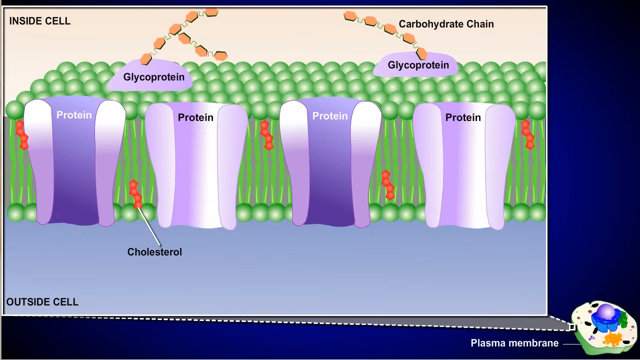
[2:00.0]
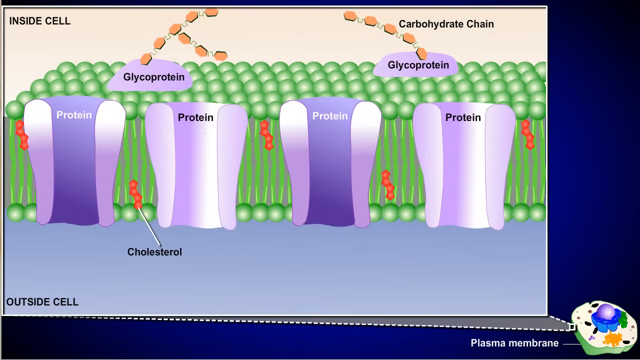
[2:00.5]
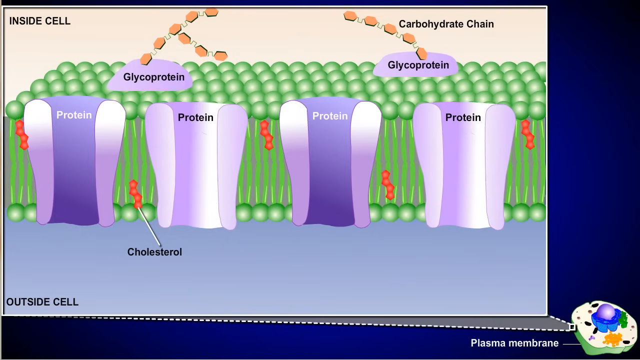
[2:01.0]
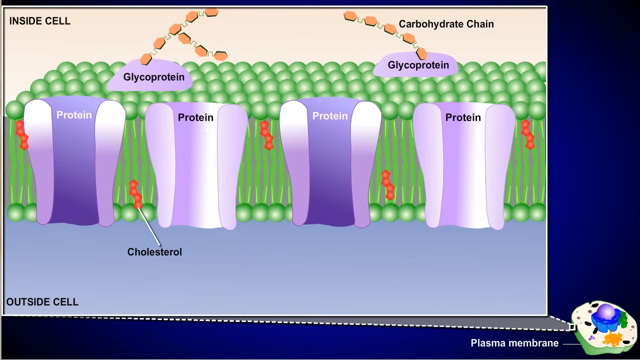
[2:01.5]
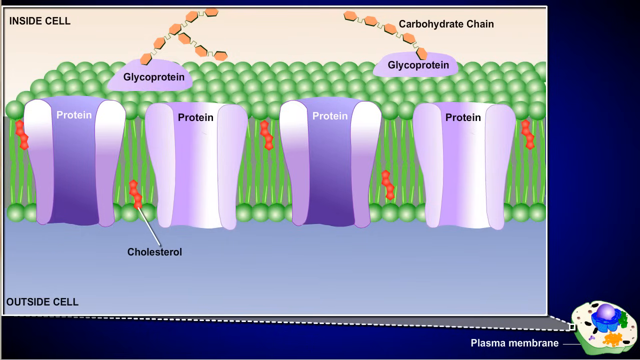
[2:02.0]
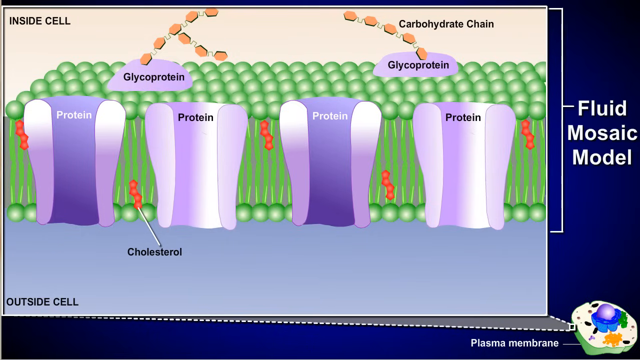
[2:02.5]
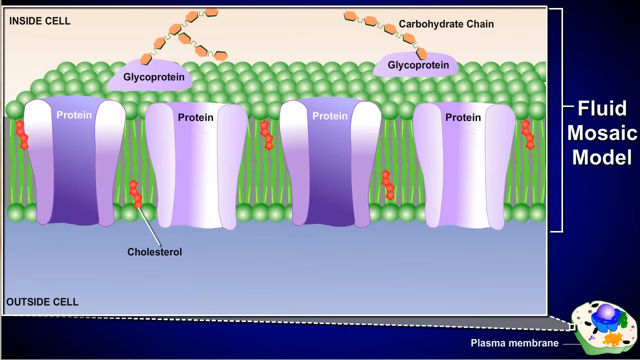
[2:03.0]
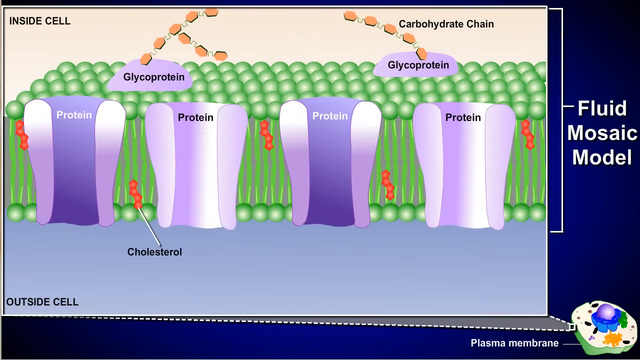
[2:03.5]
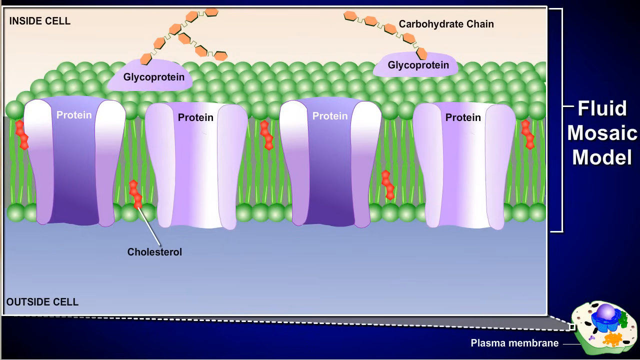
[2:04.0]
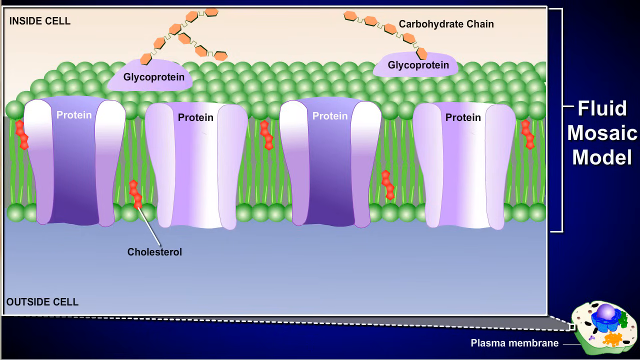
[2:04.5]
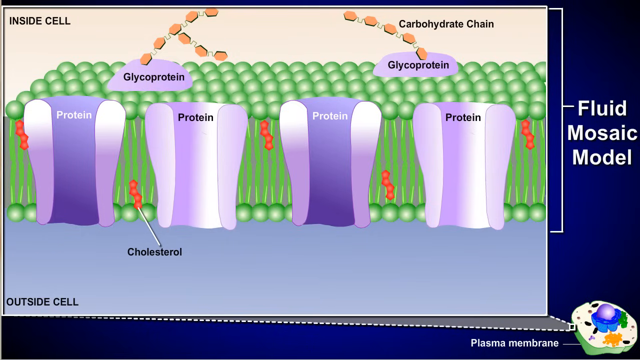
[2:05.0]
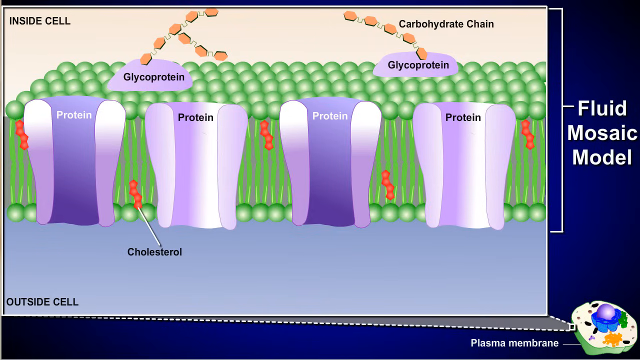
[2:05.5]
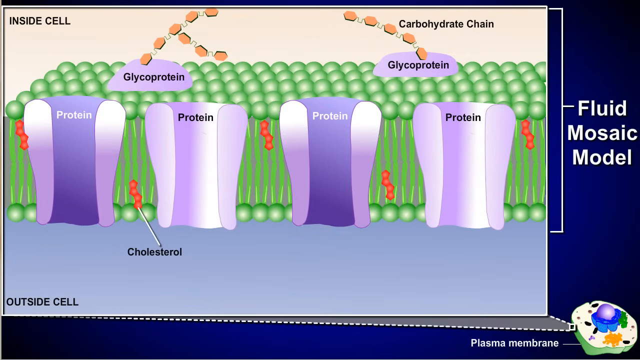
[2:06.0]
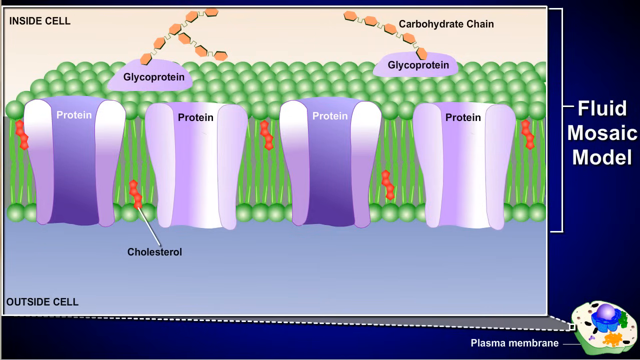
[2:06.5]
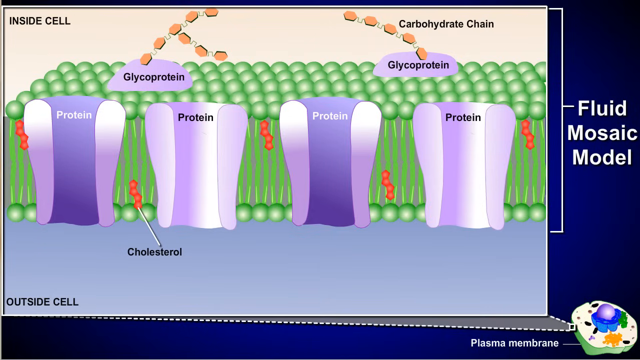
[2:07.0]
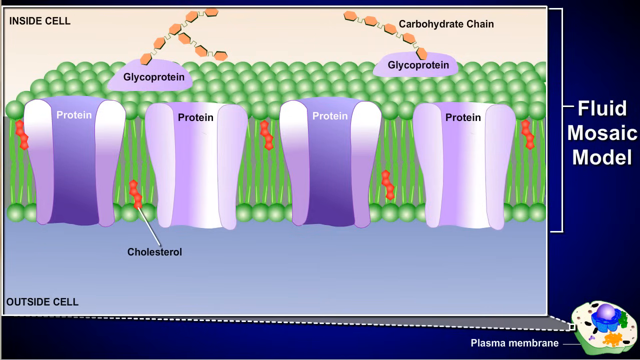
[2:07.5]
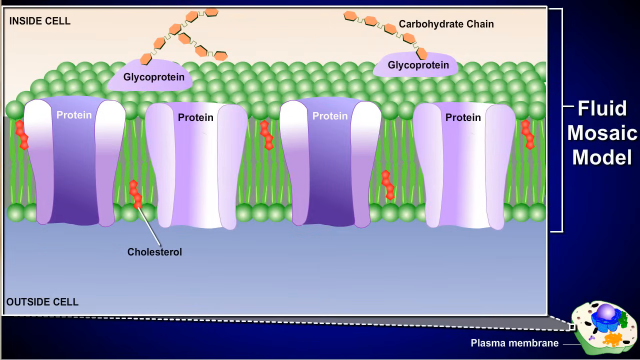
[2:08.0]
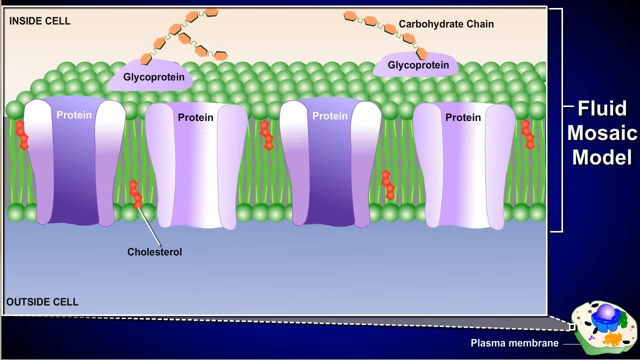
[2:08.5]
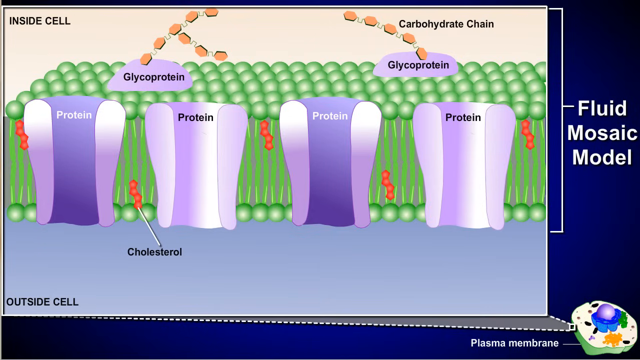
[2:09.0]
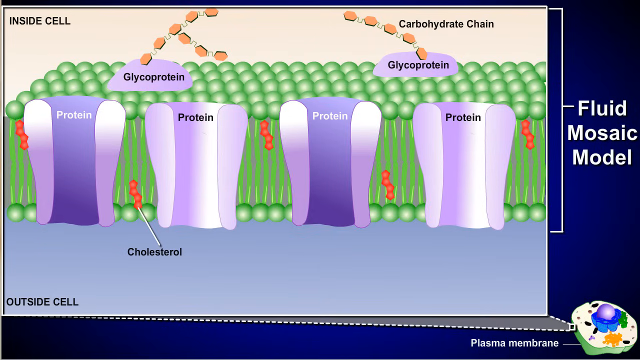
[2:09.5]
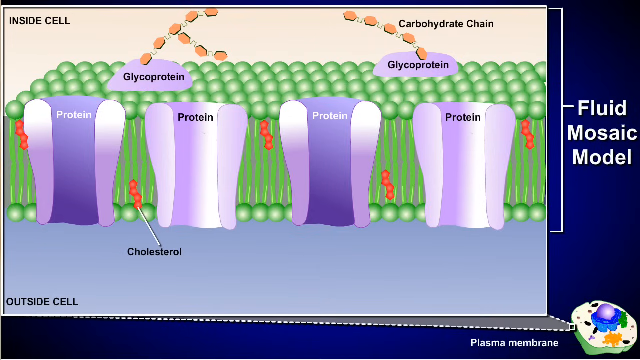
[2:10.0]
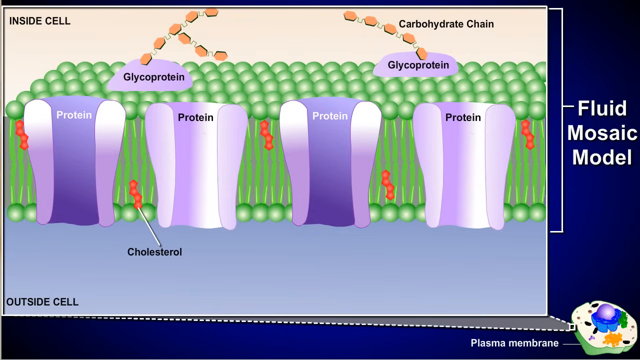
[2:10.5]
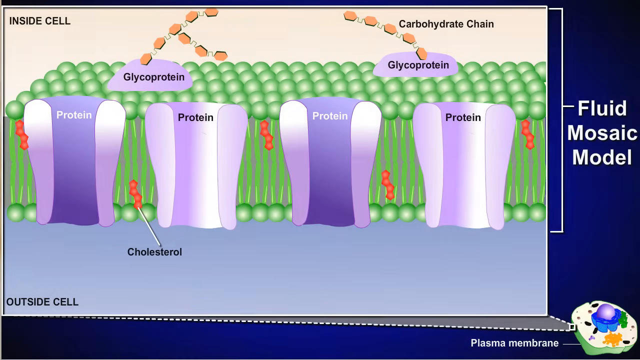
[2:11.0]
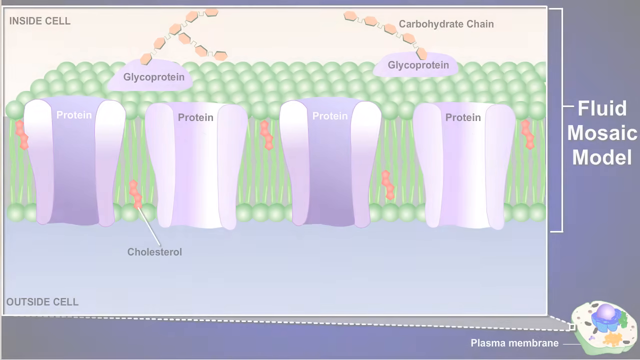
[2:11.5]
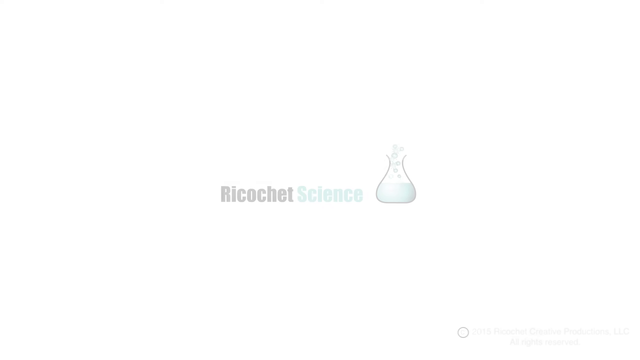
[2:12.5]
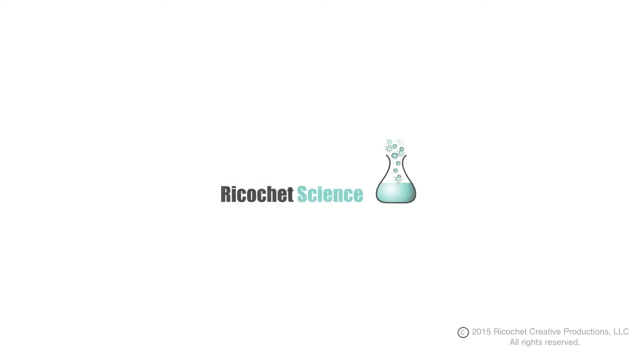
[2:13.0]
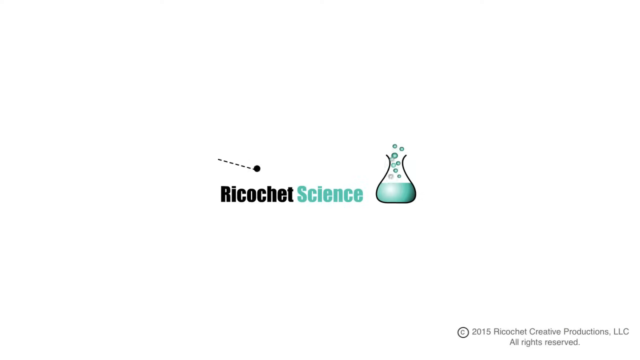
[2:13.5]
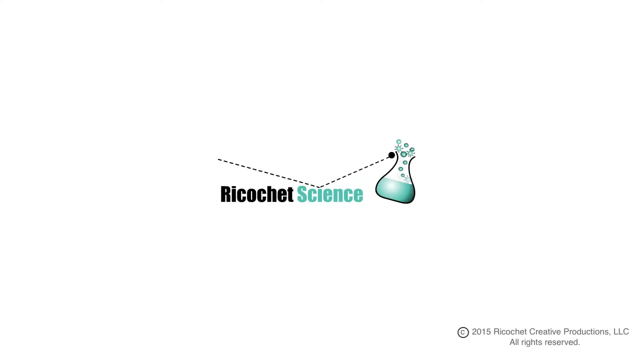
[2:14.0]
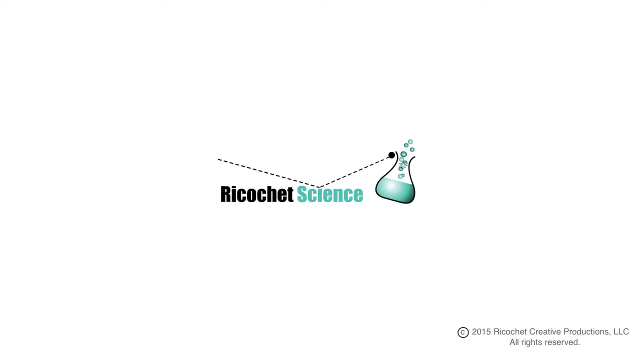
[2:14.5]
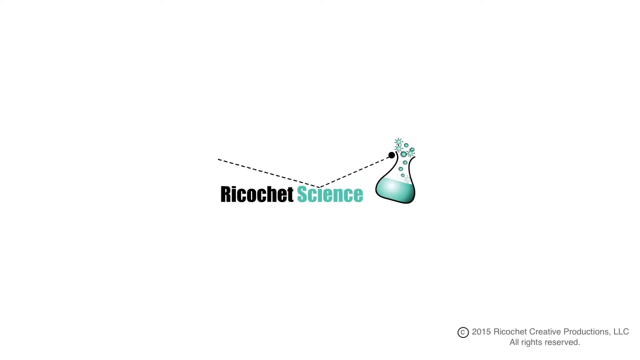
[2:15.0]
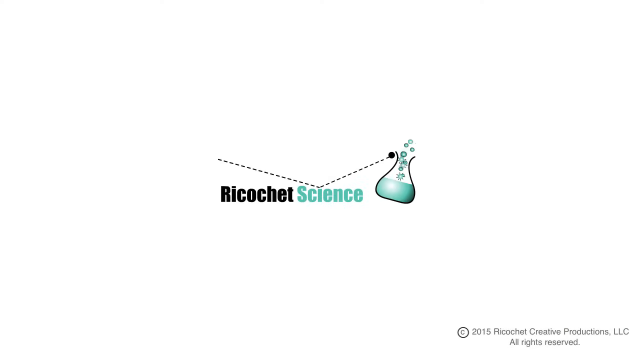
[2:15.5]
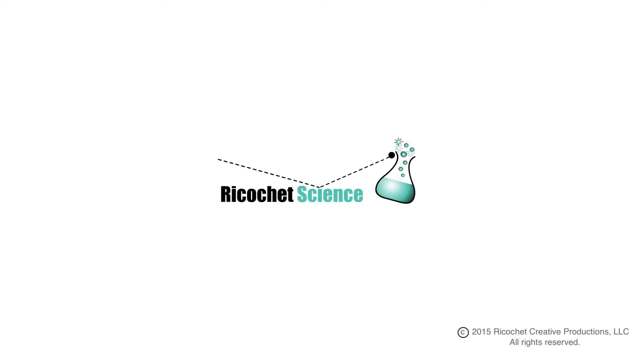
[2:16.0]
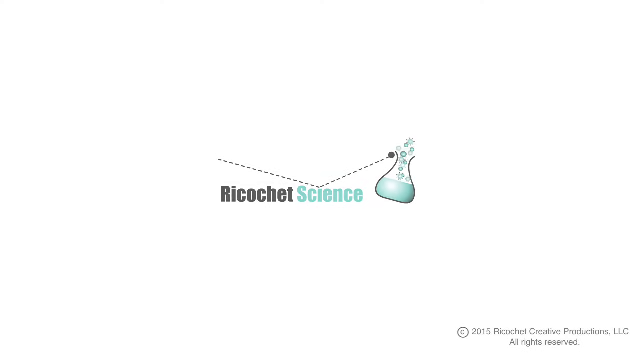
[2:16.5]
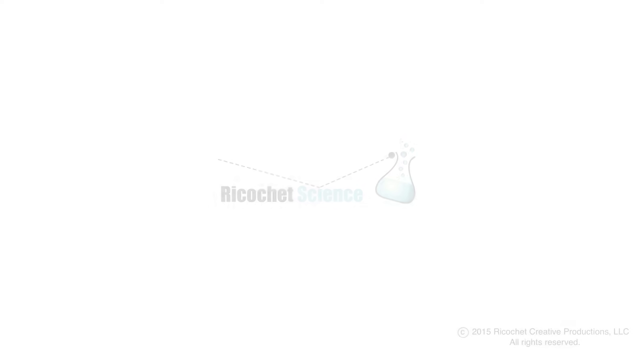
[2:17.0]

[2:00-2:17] On a blue background, another white squared box is outside the white frame. On the right side, white lettering says "Fluid Mosaic Model." At the bottom, a white dotted line, gray on the inside, points at a rounded piece that is white on top and green on the bottom, with a purple ball in the center, a blue wall around it, green stems to the right, orange stems at the bottom center, and brown dots around it. White lettering on the bottom left reads "Plasma Membrane." The top has a beige background, with black lettering on the left saying "Inside cell" and black lettering at the top right saying "Carbohydrate Chain." Five rows of green circles run from left to right. Two purple circles on the left and right sides have black lettering inside saying "Glycoprotein." Orange jagged squares run from the center, curving towards the center of the page on both sides. In front of the green stems and the green balls at the bottom are light and dark purplish rounded pieces with the word "Protein" in the center at the top: the first in white, the second in black, the third in white, and the fourth in black. Each one has a four star-edged orange thing. The one second from the left, nearest the bottom, has a white stem attached to it, labeled "Cholesterol" in black lettering. The bottom end is gray, with black lettering on the bottom left saying "Outside Cell." The screen then goes white, with black lettering in the center saying "Ricochet" and teal lettering saying "Science." A black jar has some teal fluid at the bottom with teal bubbles coming up. A dotted black line moves from left to right, bouncing off the I of "Science" and forming a black ball that is tipped over the jar on the right side. At the bottom right, a black circle with a C inside it is followed by "2015 Ricochet Creative Products LLC. All rights reserved."